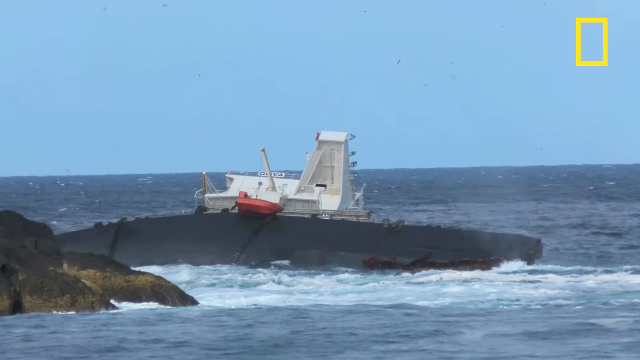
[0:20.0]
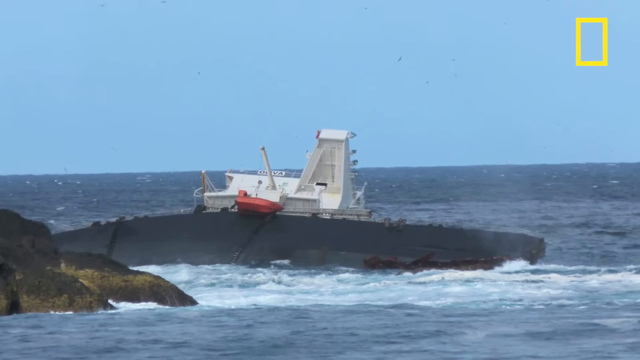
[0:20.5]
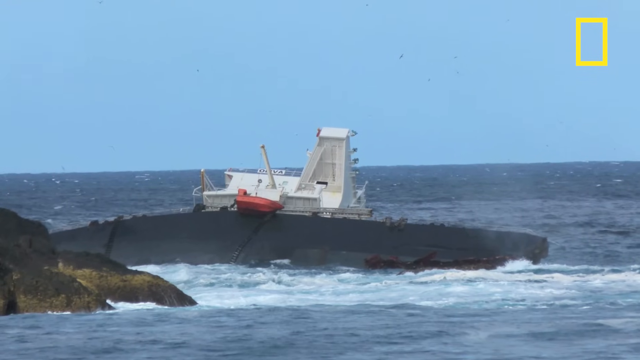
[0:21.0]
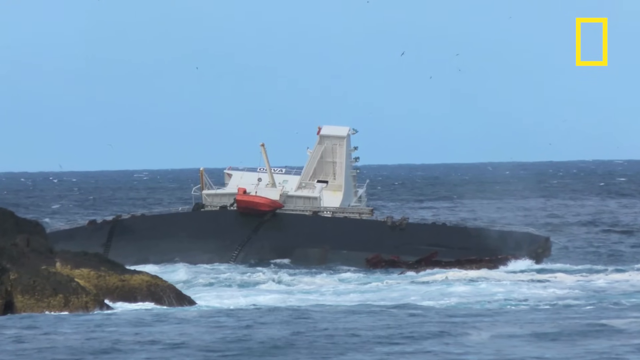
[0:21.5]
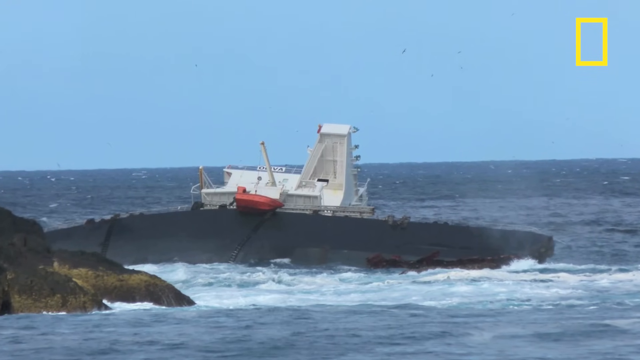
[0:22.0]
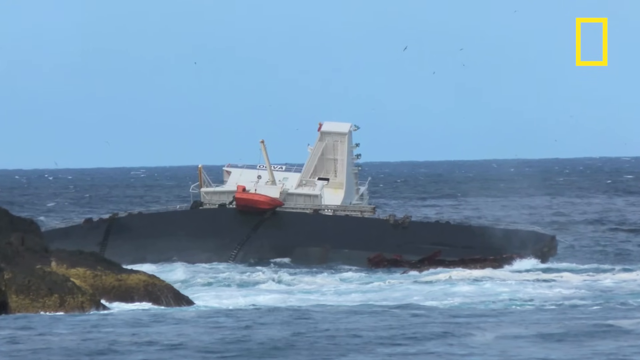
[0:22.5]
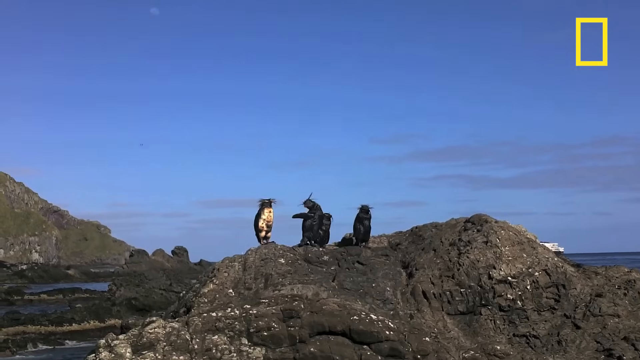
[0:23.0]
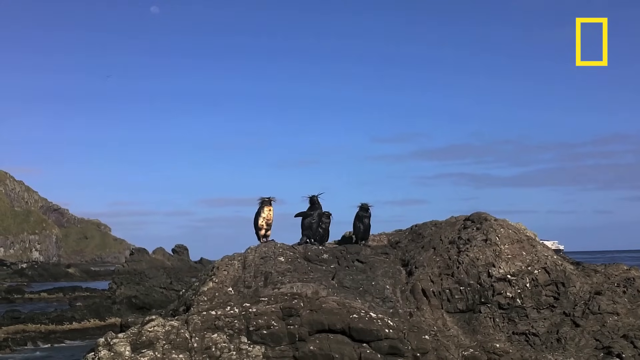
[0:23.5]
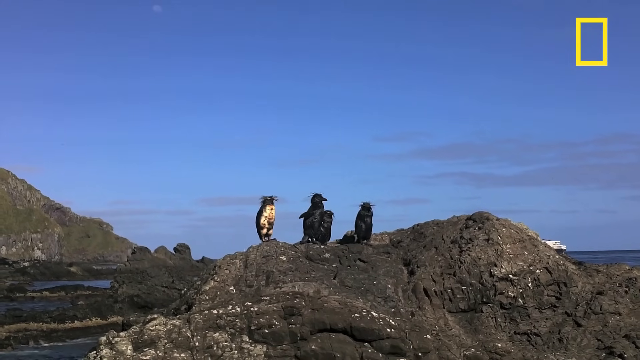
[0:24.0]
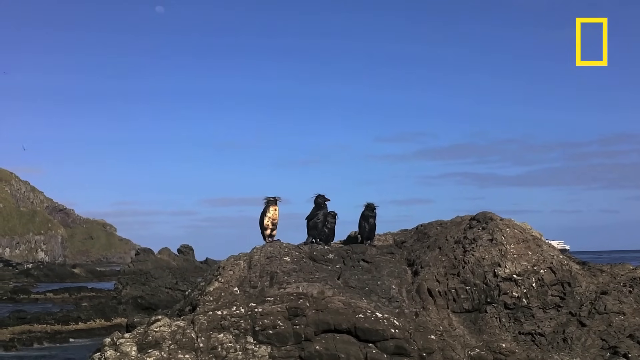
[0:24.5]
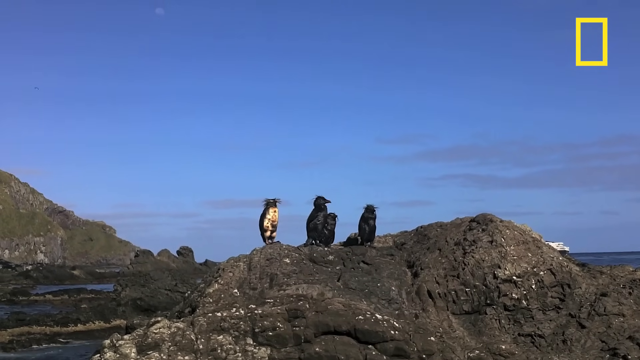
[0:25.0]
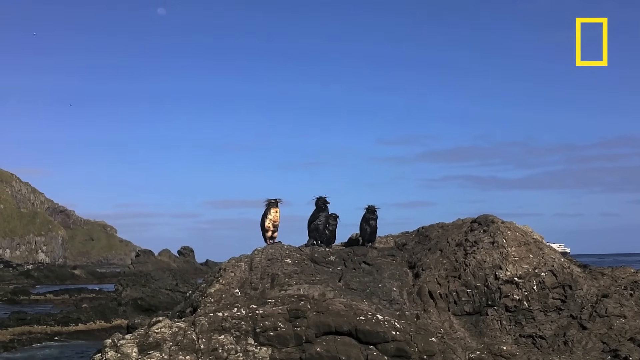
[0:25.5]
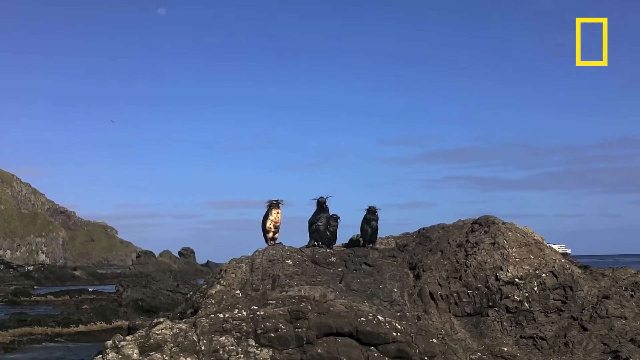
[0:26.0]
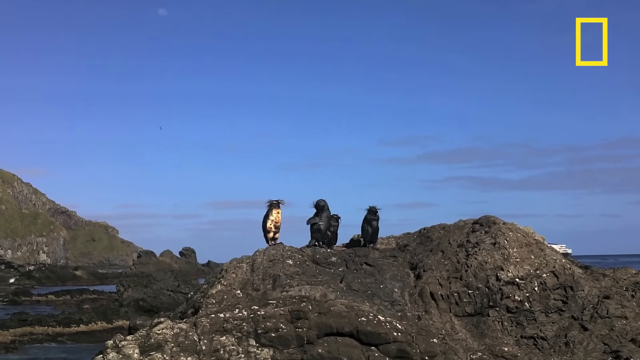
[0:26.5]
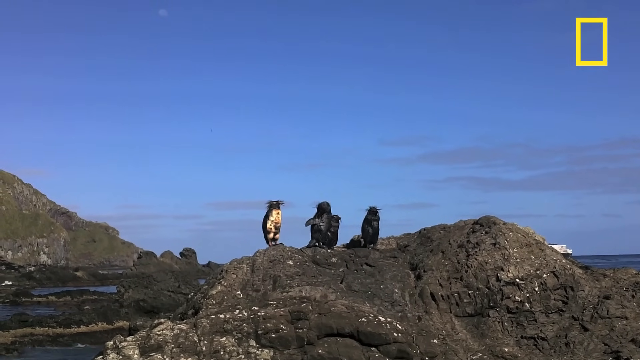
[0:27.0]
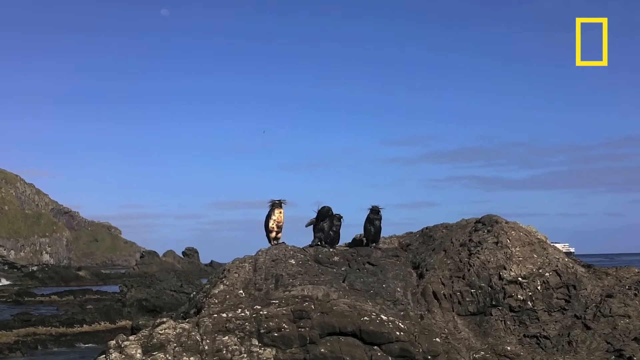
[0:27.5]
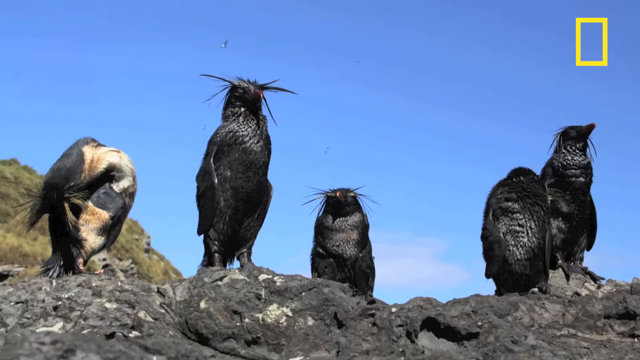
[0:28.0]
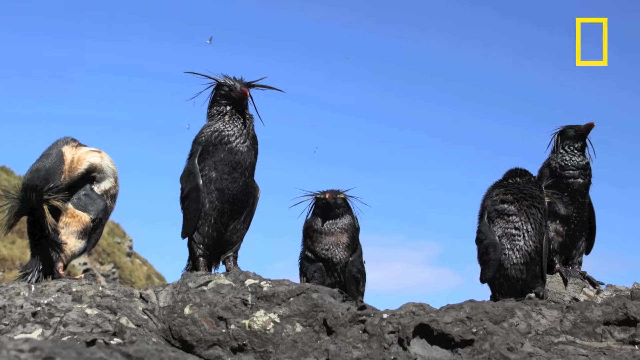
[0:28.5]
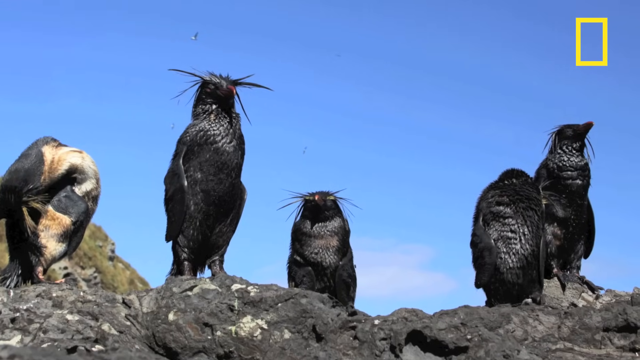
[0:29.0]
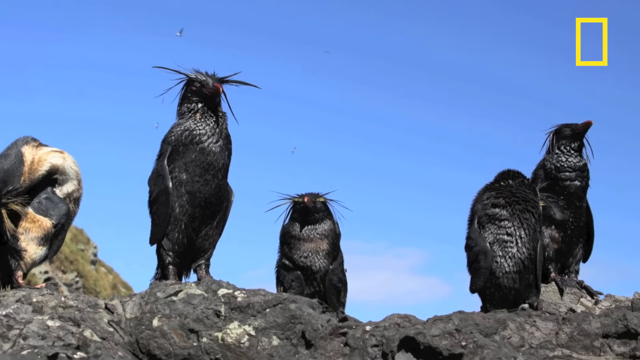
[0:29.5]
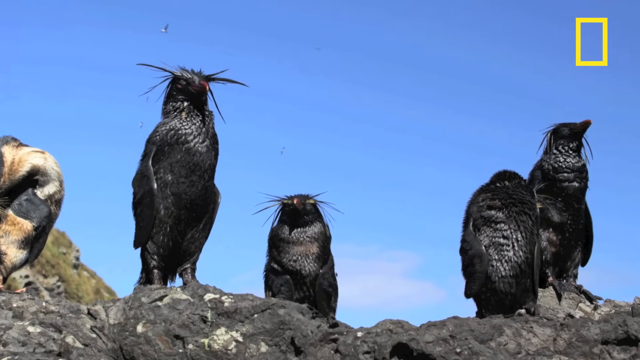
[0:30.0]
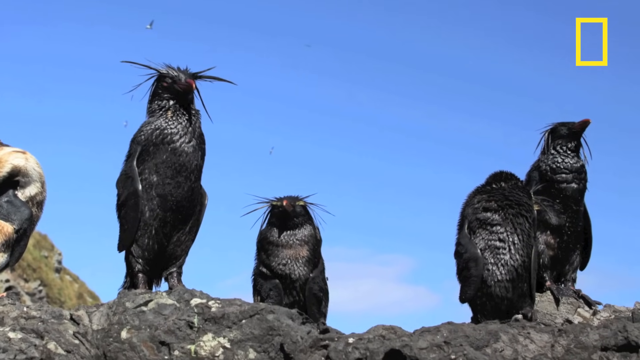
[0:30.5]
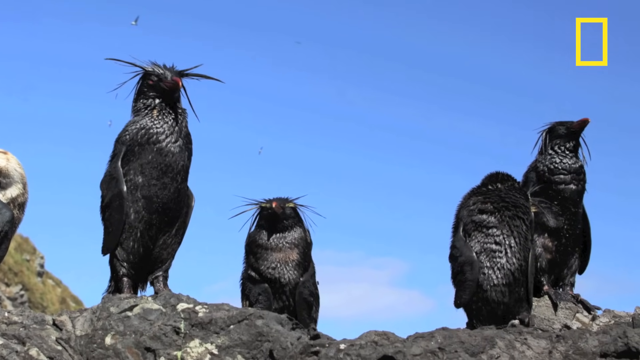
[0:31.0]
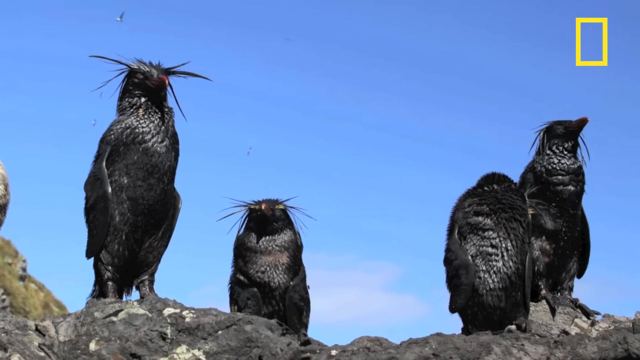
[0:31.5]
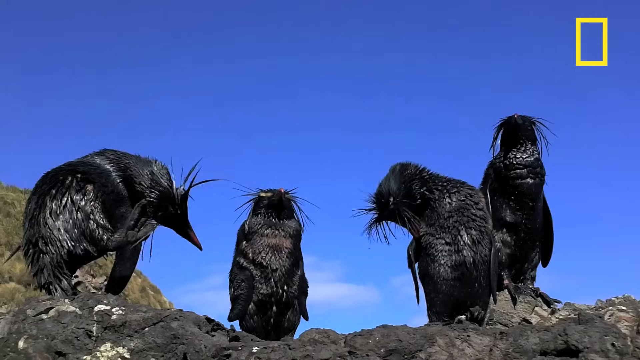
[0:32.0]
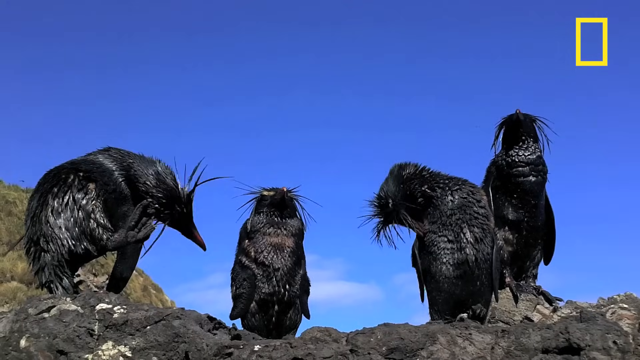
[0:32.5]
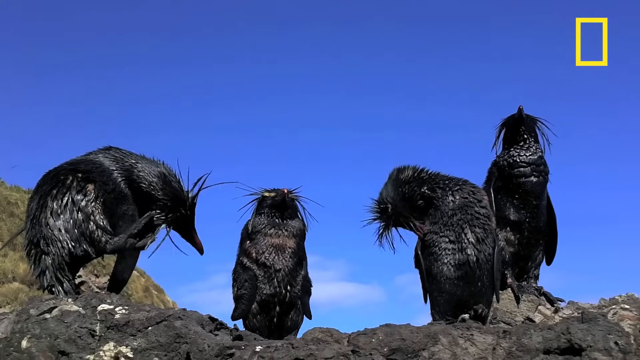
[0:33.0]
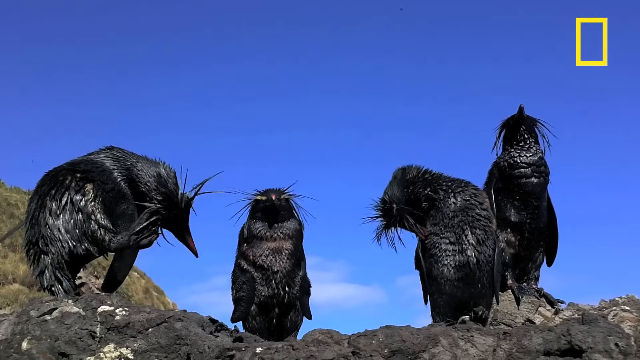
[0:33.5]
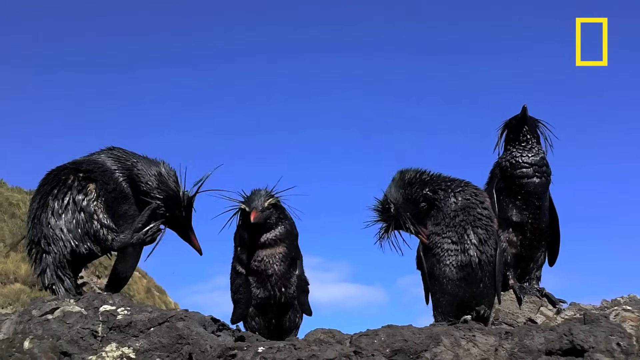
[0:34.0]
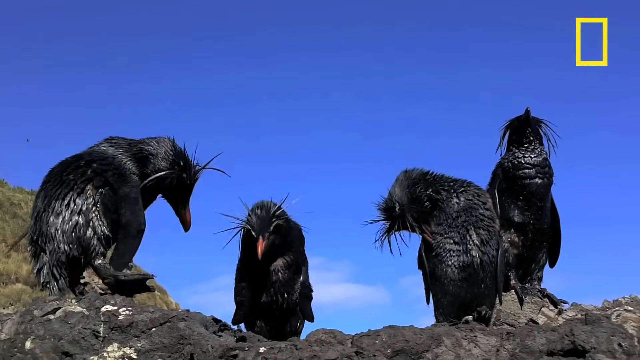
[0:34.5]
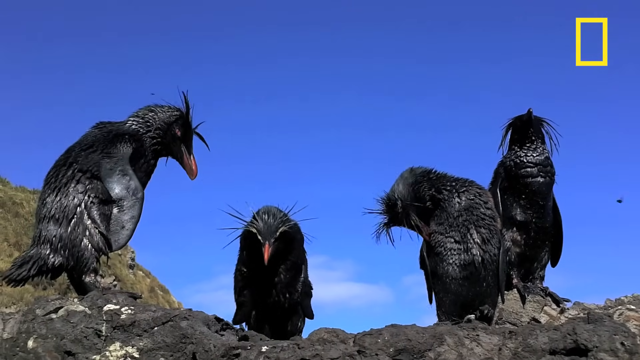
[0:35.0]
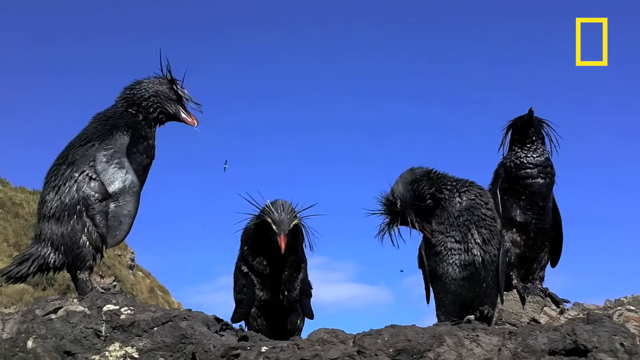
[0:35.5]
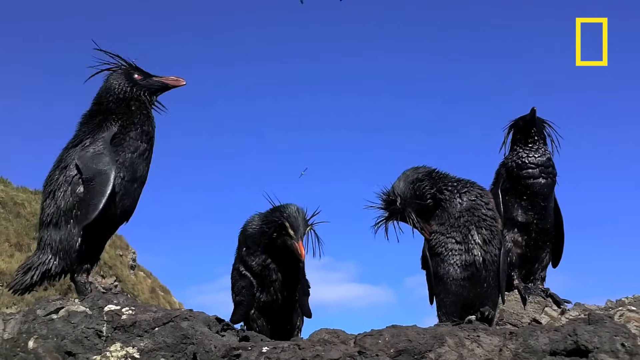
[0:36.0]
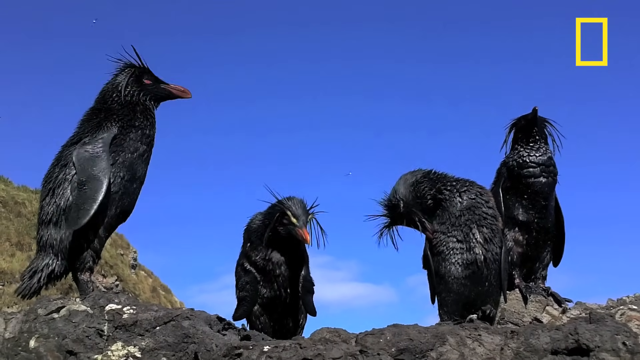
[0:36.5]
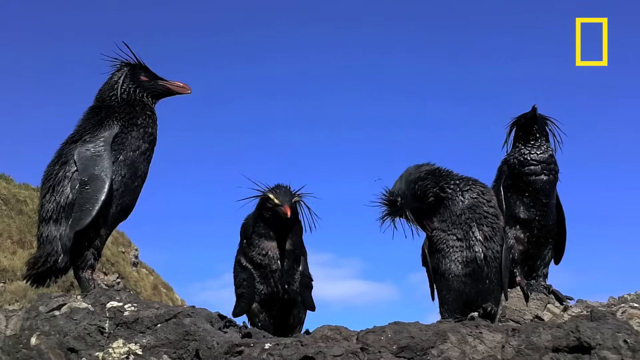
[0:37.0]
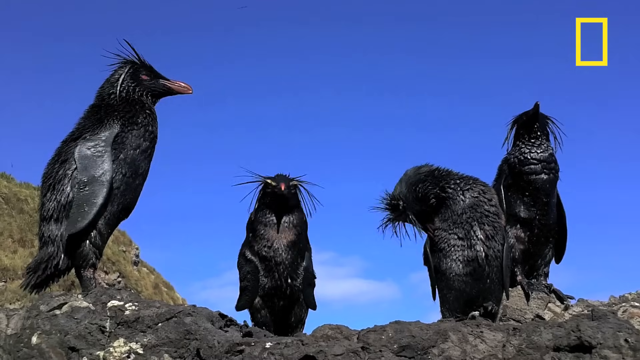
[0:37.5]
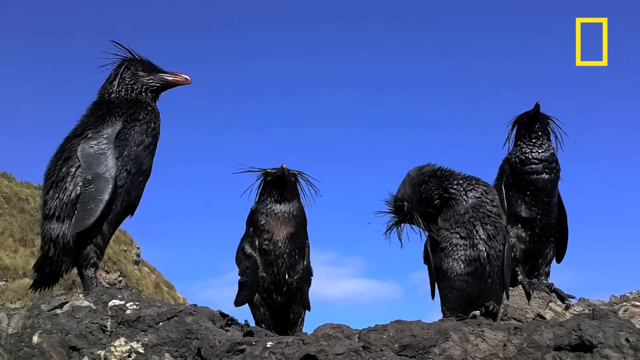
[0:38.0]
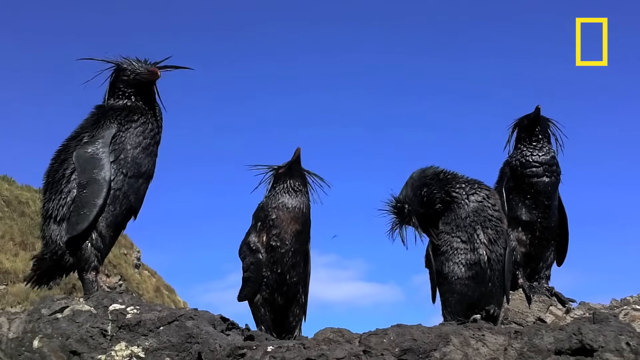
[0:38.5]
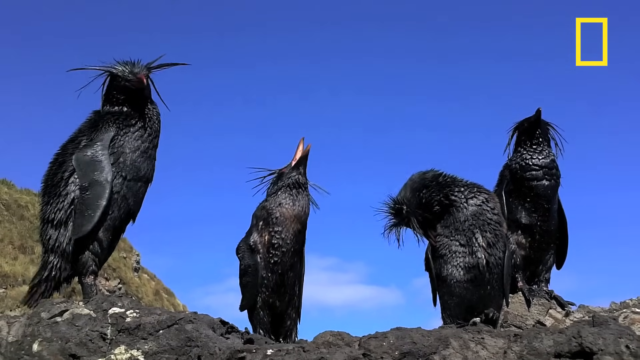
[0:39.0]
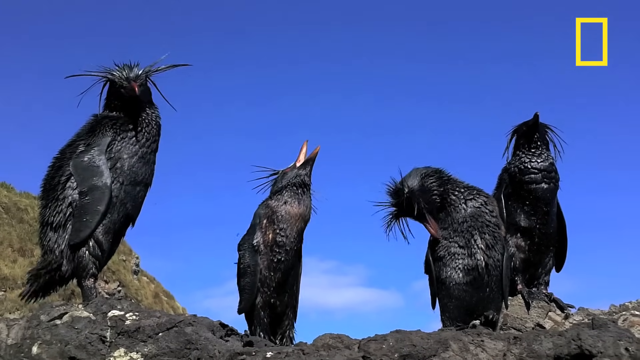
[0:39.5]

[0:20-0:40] The scientific apparatus is visible again, and then the video cuts to a shot of what looks like five penguins on the rocks along the water. They all look to be the same kind of penguin: black, with kind of little macaroni-like things sticking out of their heads. They are kind of hanging out together on the rocks, scratching the sides of their heads. One of them opens its mouth, probably to make a noise. They are on the rocks by the water under the same blue sky, and it looks like a pretty calm day on the water.